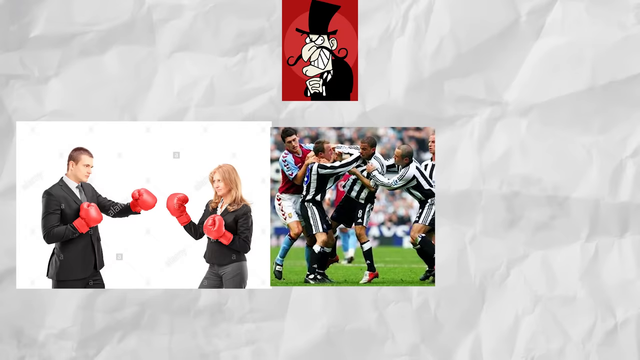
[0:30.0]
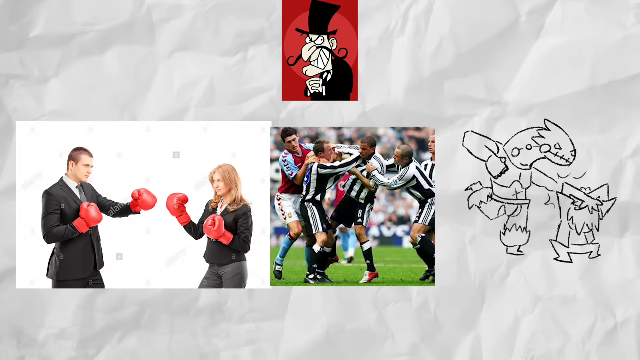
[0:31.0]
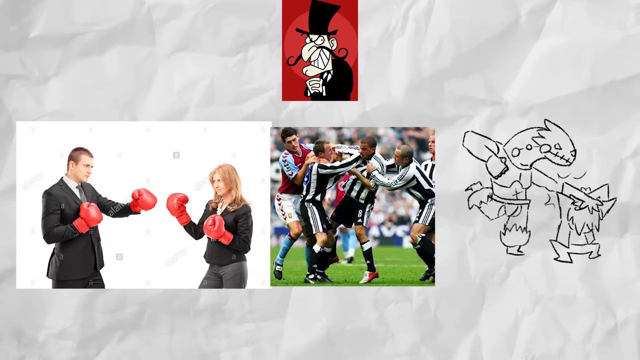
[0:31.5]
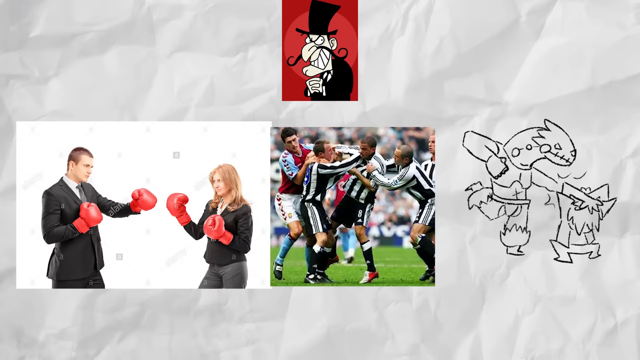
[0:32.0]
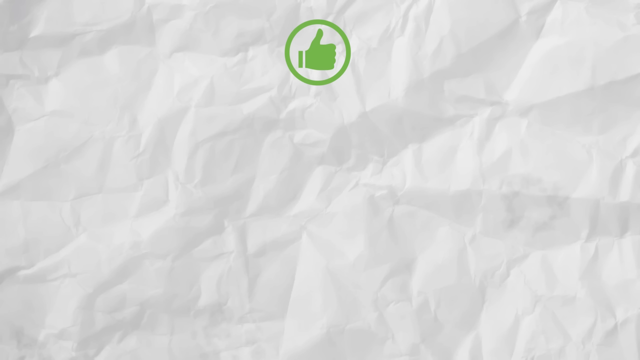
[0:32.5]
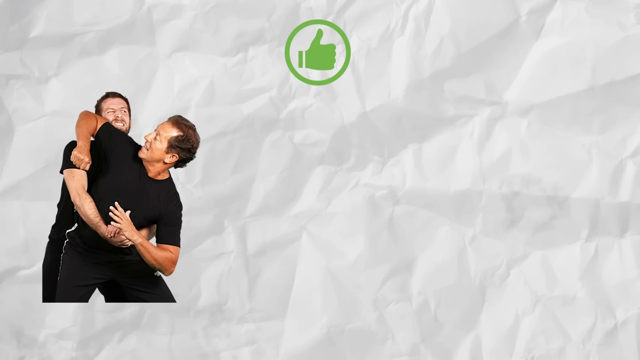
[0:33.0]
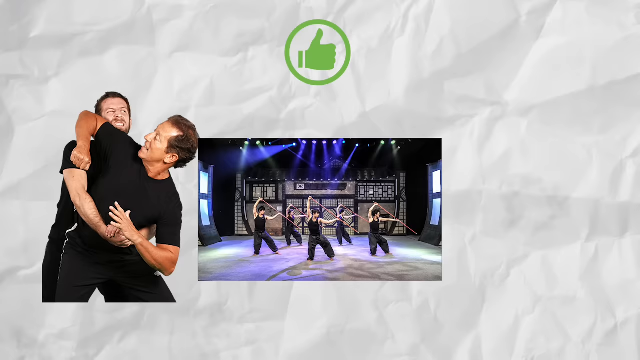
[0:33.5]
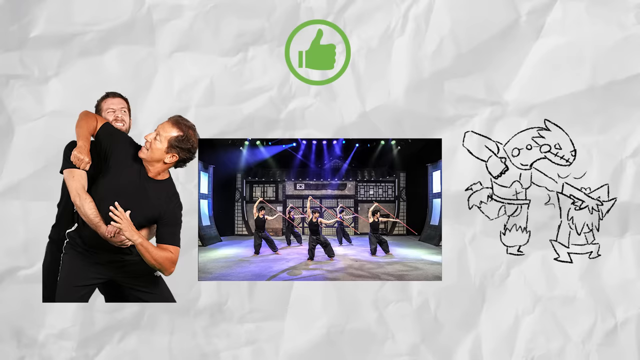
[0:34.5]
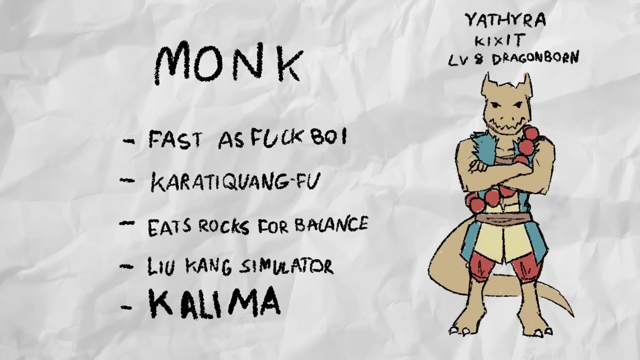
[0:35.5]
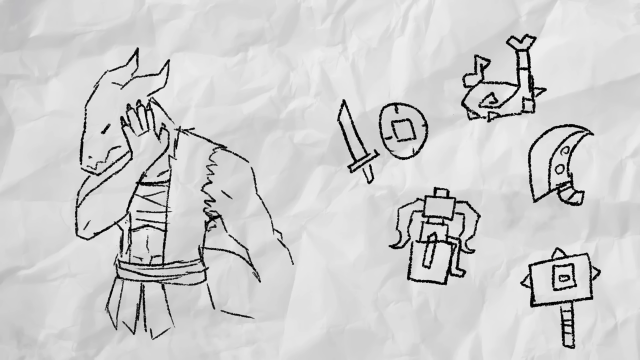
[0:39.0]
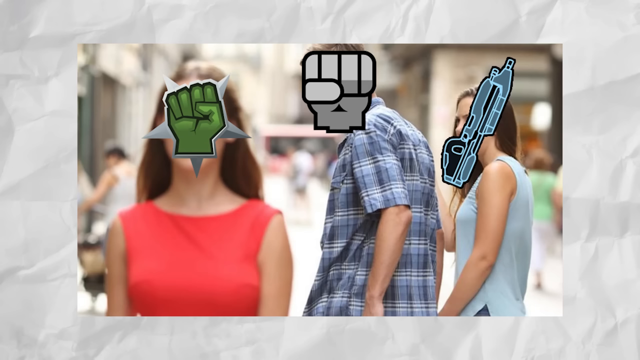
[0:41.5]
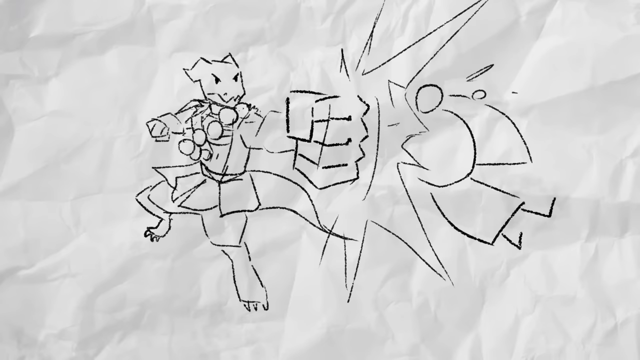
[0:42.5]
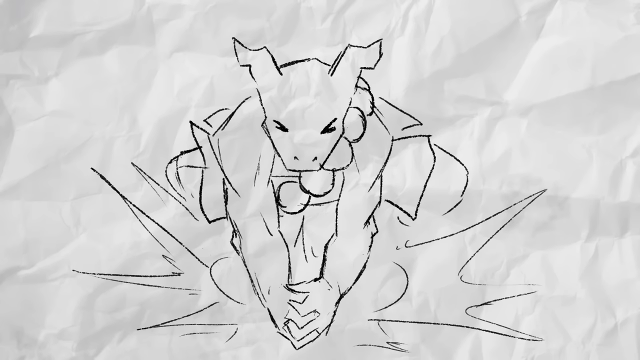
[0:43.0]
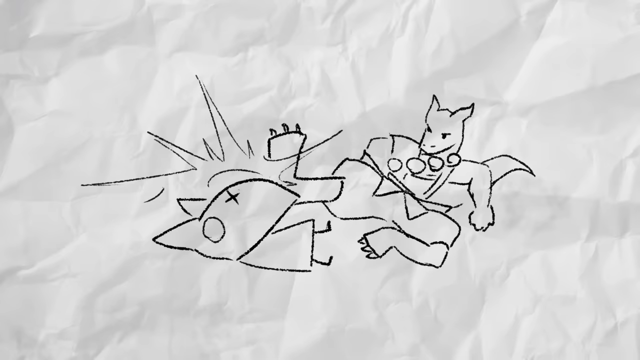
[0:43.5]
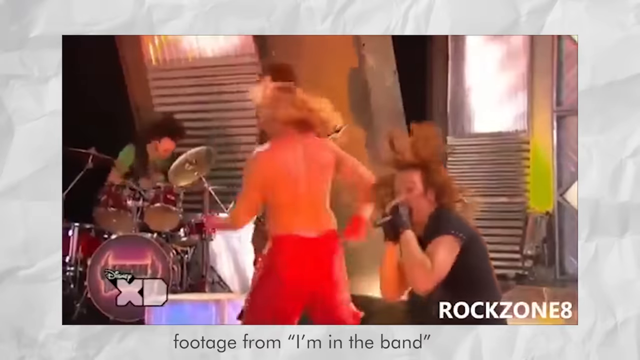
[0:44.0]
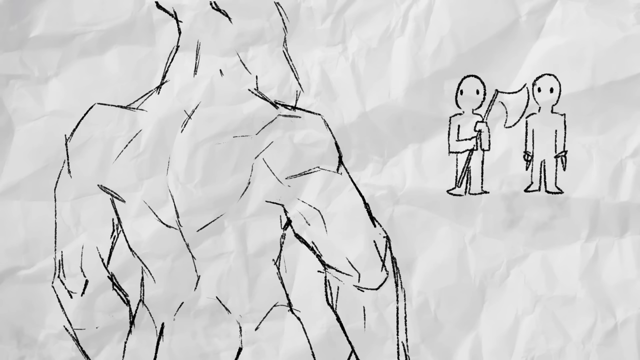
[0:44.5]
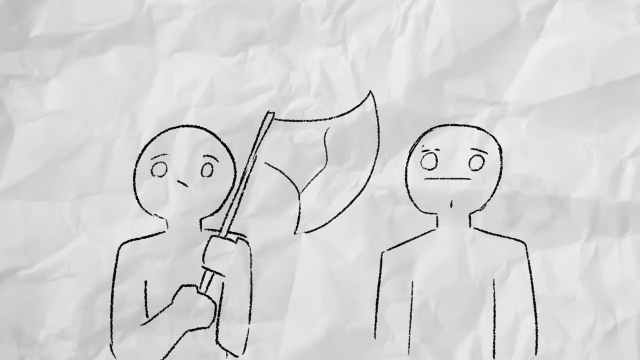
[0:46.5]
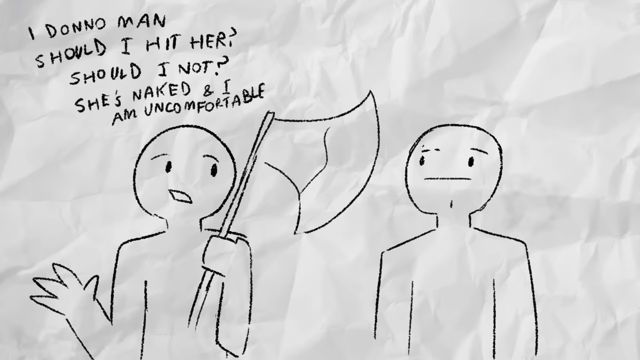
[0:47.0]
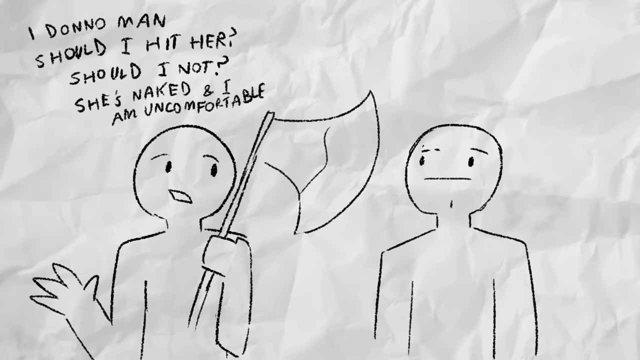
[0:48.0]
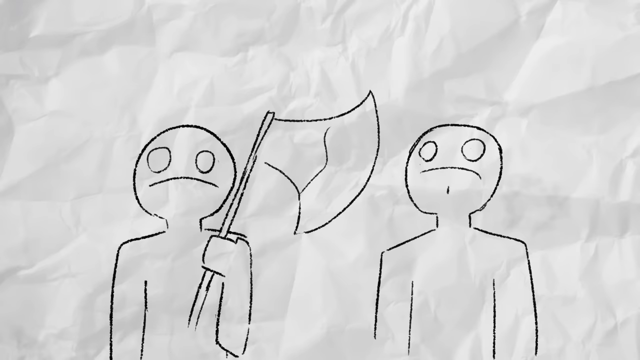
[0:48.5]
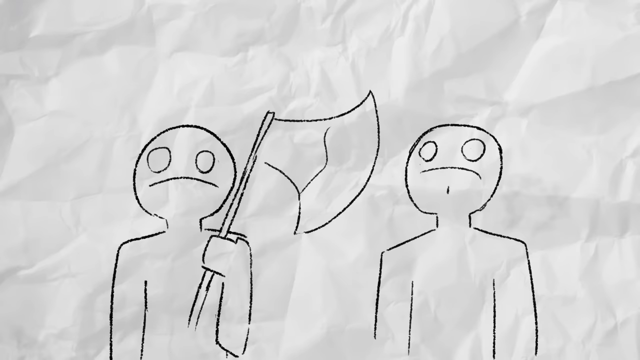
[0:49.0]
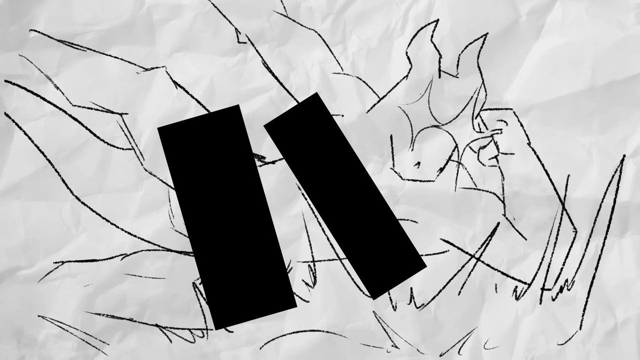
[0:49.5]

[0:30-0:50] On a white background that looks like crinkled paper, a red rectangle runs across the top containing a cartoon figure with a black hat, a black jacket, a long black curly-Q mustache, and teeth showing. The figure faces forward to the left and looks over to the right. Below, on the left, is a man, and on the right is a woman wearing red boxing gloves. To the right of that, two soccer players are getting in a fight while two people on either side try to hold them back. The drawing of the creature then appears on the left side, rubbing the top of his head and pushing his head down toward another drawn person. Next come a green circle with a thumbs-up in it, a man on the left side throwing an elbow at somebody, and people dancing in the middle. The creature drawing appears on the left side: he is brown, with a blue vest, a yellow shirt, red pants, and red dots around him. Above him on the left is his name, "Monk," and underneath are five vertical lines going across from left to right, with information about the character to their right. The character is then shown on the left putting his hand up and turning his face away, while five items for battle are drawn on the right side. Then comes the well-known meme of a girl walking by with a guy looking back at her while another girl holds onto him; there is a green hand on the girl's face, a gray hand on his face, and a gun on the face of the girl on the right. Action shots follow of the drawing of him hitting and beating up people. He is up above two of them, they are scared, and he throws an elbow drop on them. There is a quick flash of a garage band performing.